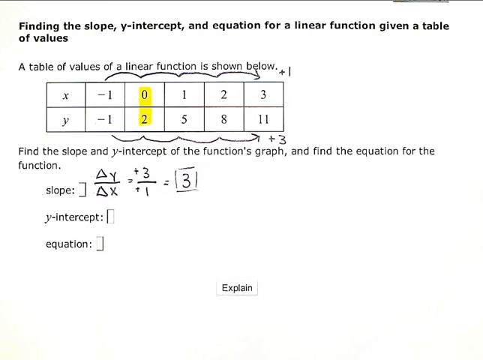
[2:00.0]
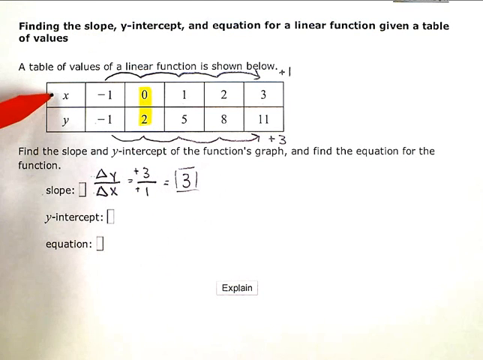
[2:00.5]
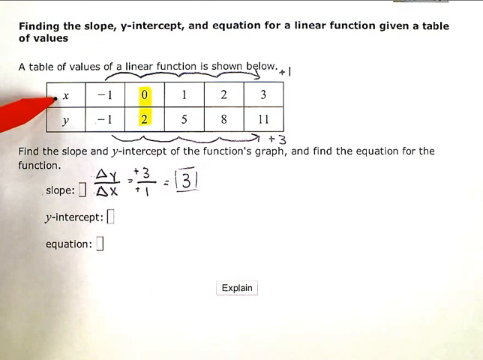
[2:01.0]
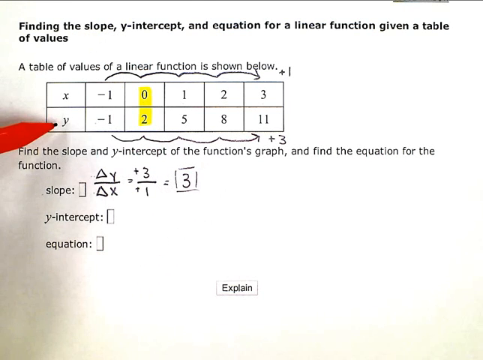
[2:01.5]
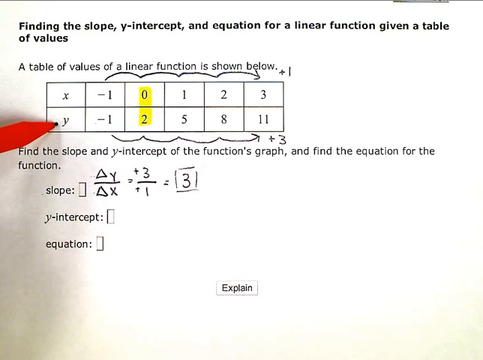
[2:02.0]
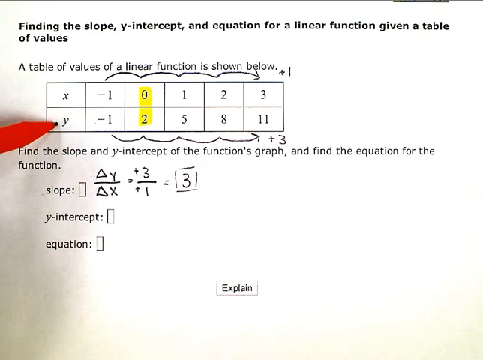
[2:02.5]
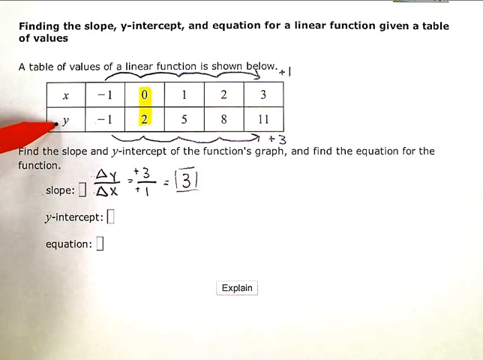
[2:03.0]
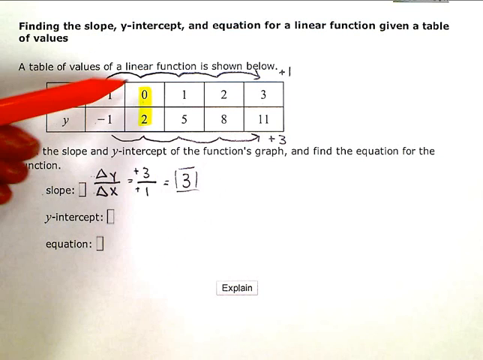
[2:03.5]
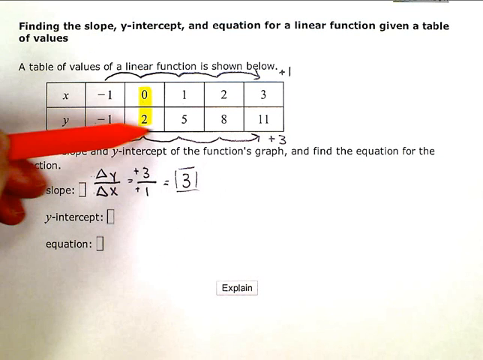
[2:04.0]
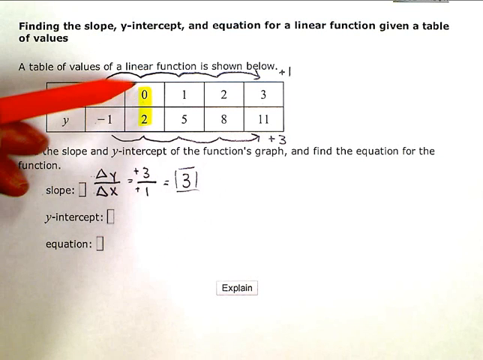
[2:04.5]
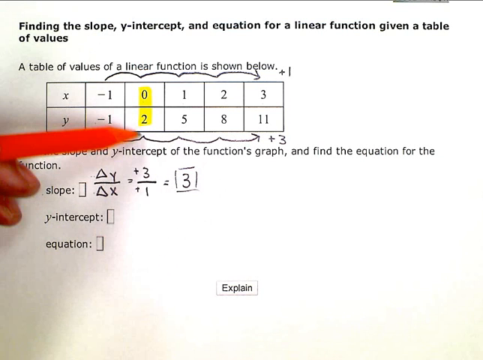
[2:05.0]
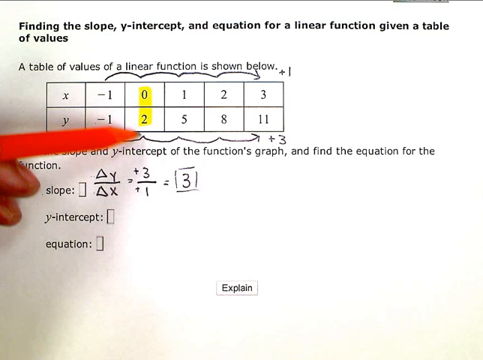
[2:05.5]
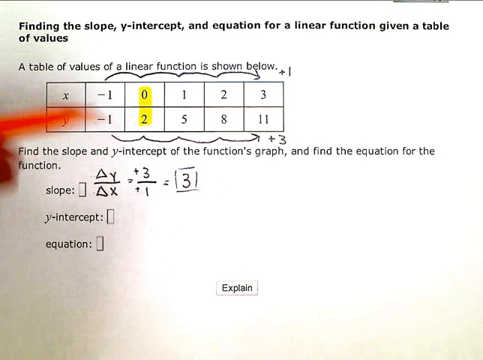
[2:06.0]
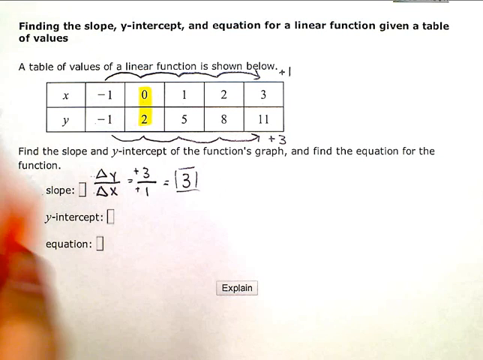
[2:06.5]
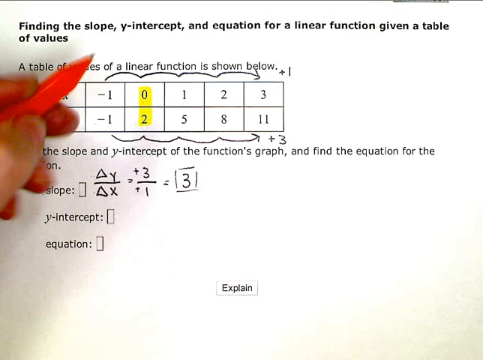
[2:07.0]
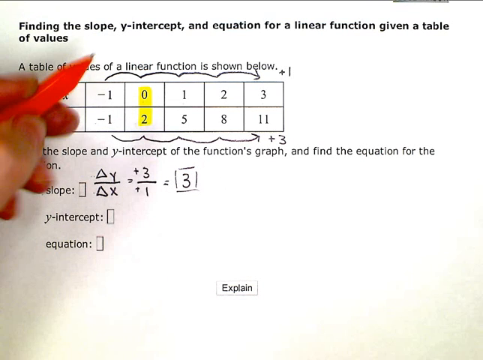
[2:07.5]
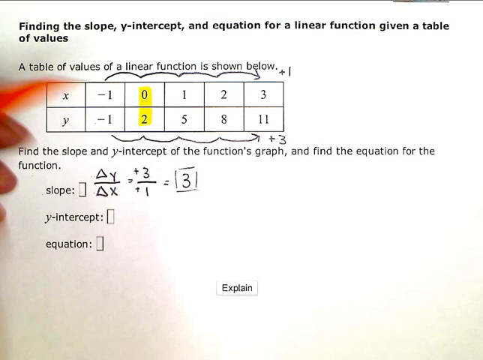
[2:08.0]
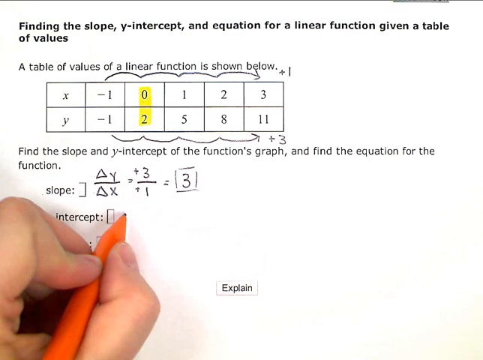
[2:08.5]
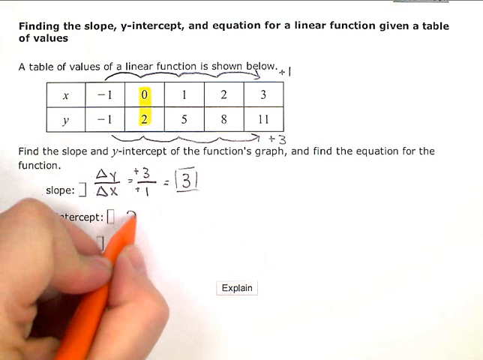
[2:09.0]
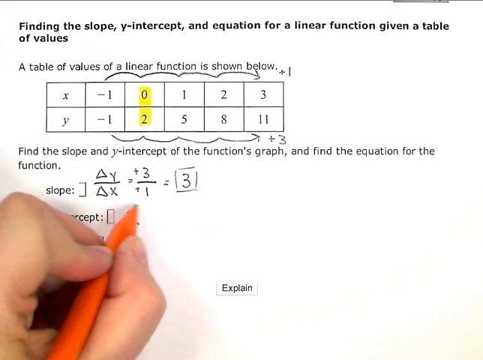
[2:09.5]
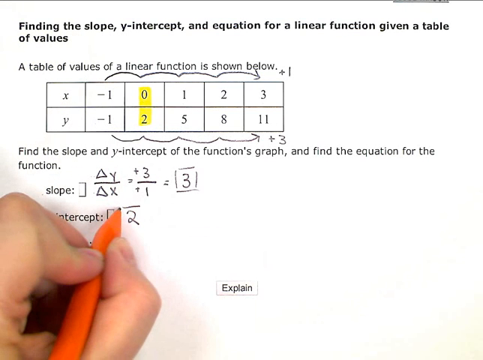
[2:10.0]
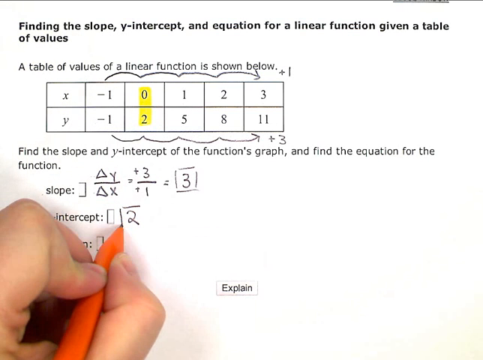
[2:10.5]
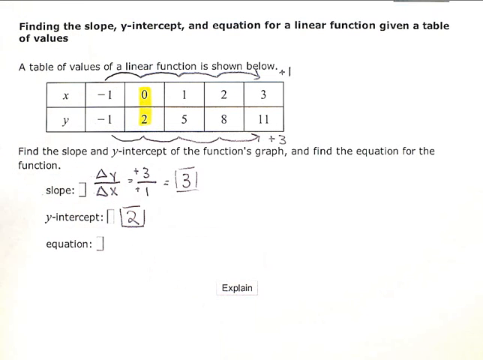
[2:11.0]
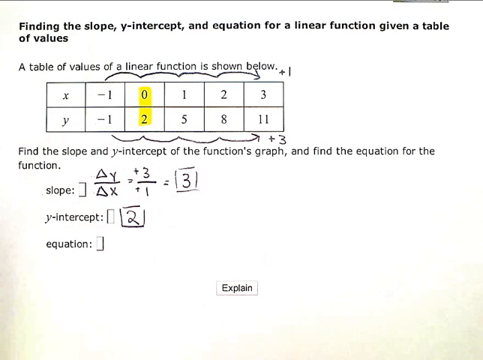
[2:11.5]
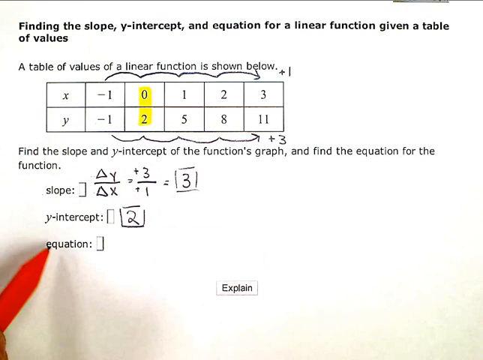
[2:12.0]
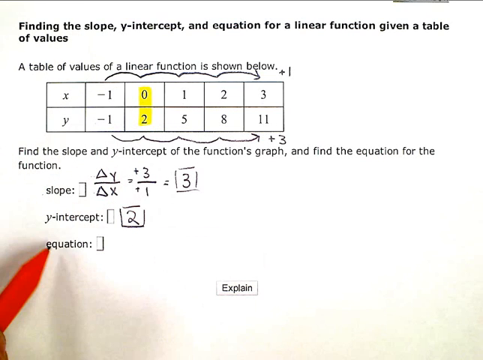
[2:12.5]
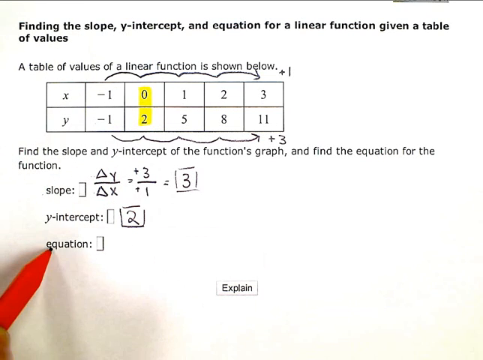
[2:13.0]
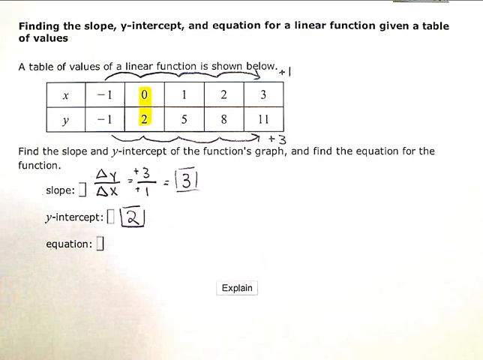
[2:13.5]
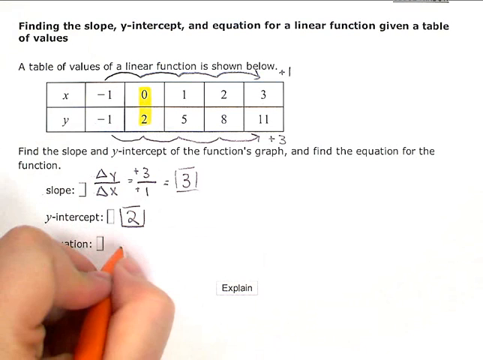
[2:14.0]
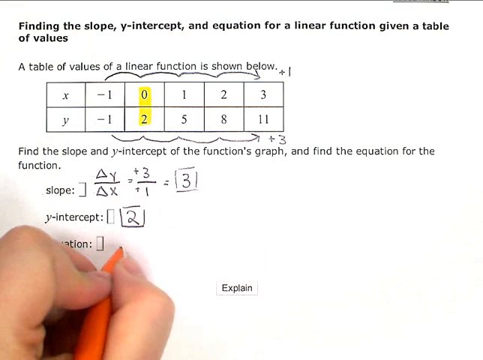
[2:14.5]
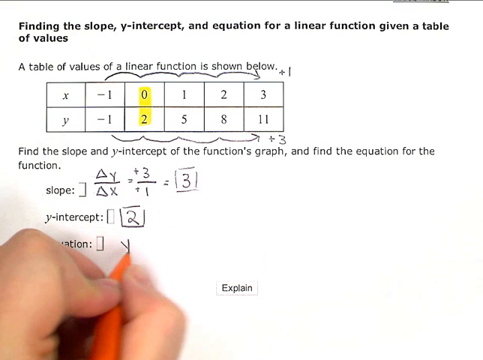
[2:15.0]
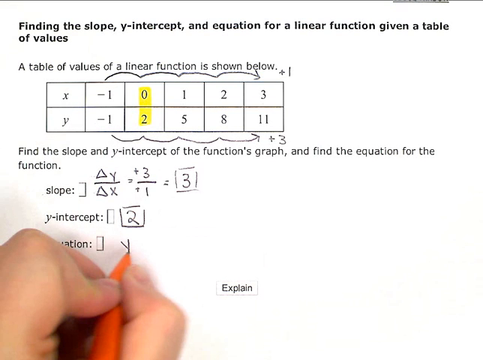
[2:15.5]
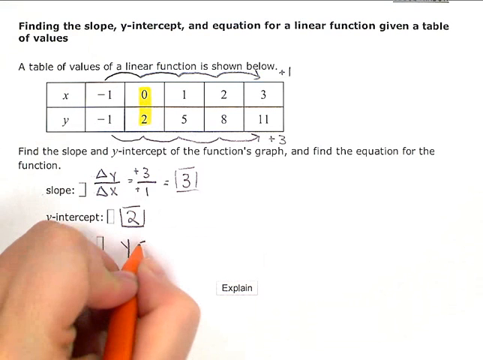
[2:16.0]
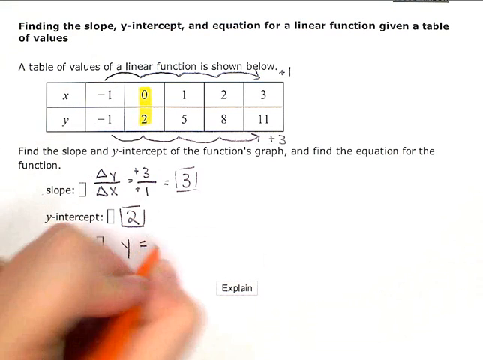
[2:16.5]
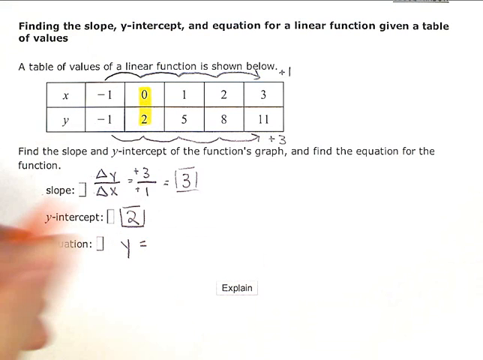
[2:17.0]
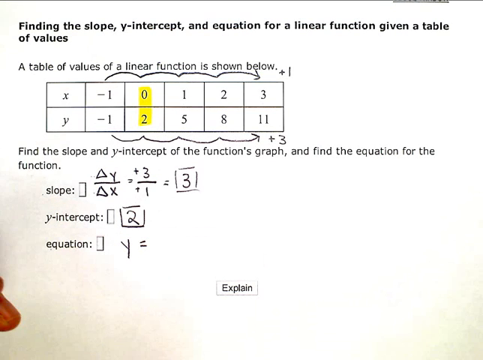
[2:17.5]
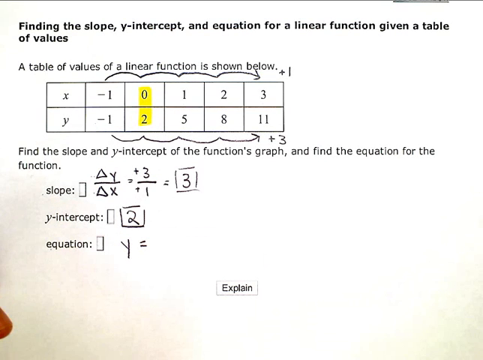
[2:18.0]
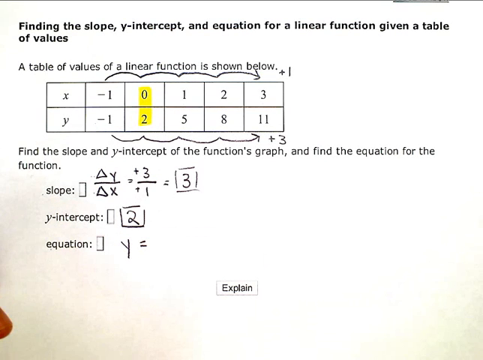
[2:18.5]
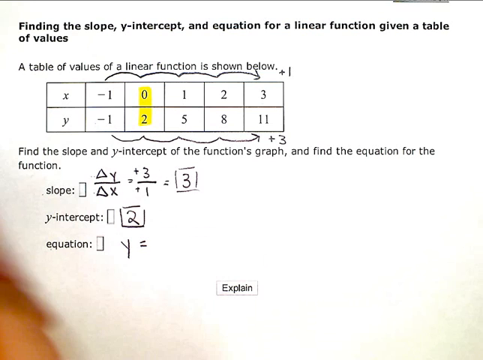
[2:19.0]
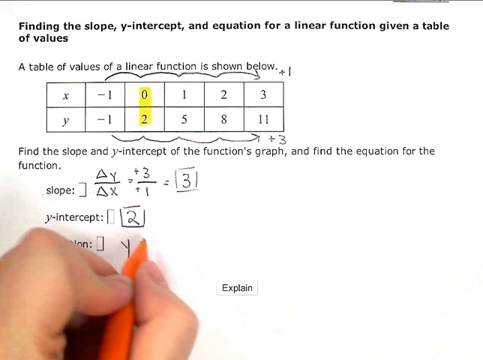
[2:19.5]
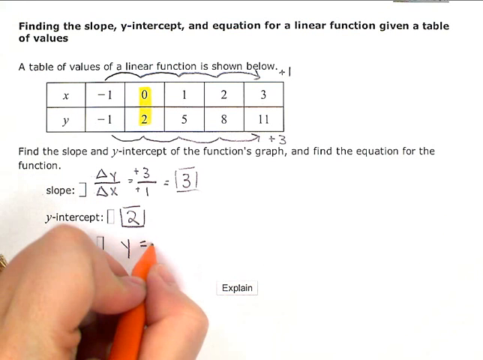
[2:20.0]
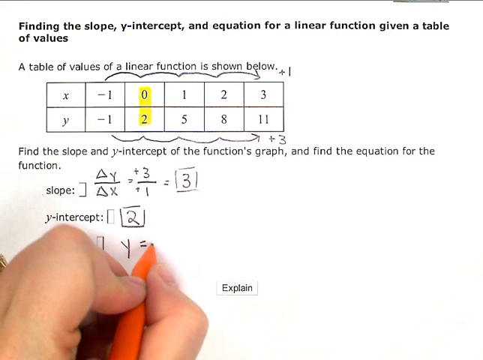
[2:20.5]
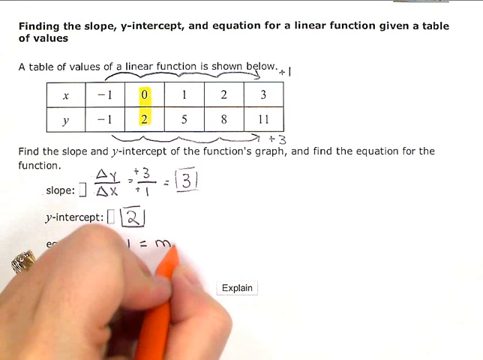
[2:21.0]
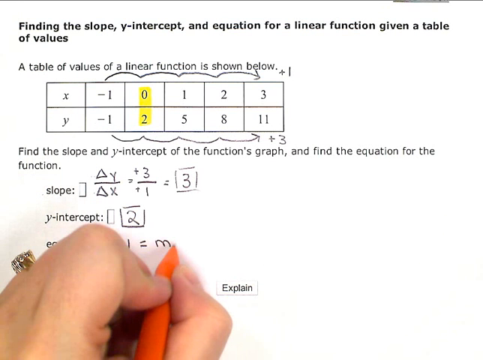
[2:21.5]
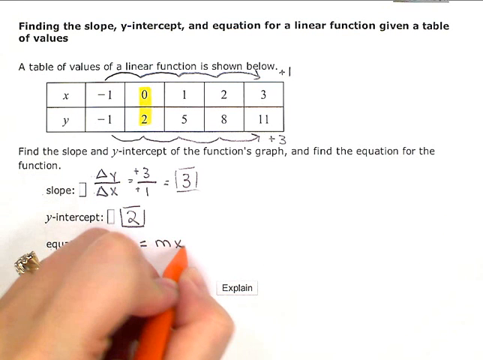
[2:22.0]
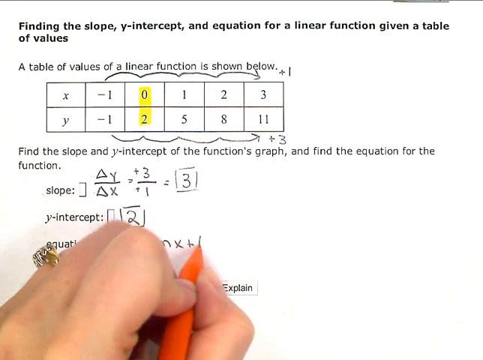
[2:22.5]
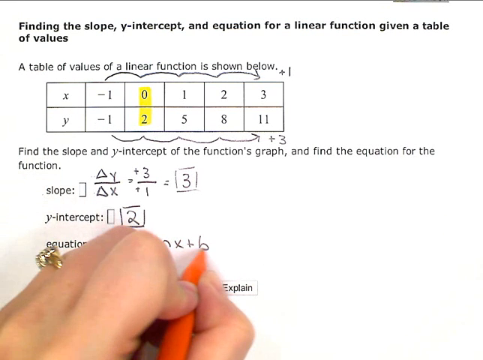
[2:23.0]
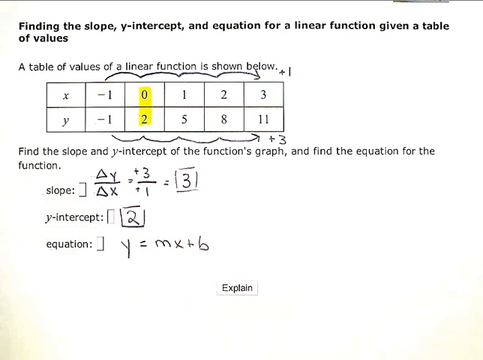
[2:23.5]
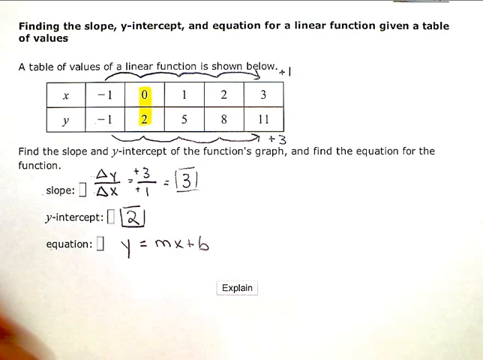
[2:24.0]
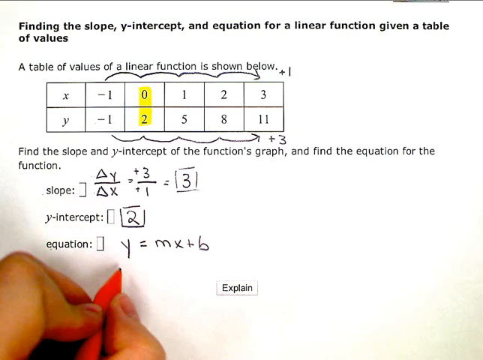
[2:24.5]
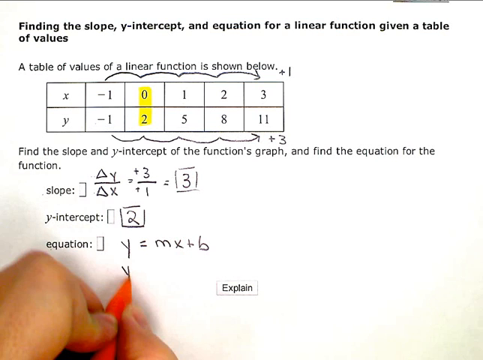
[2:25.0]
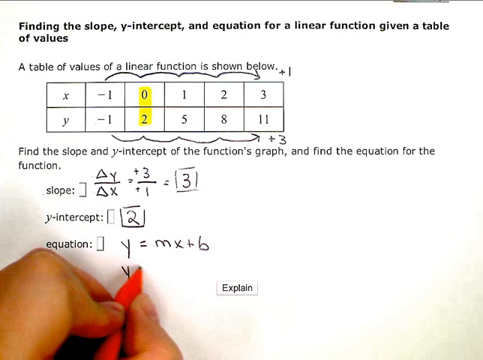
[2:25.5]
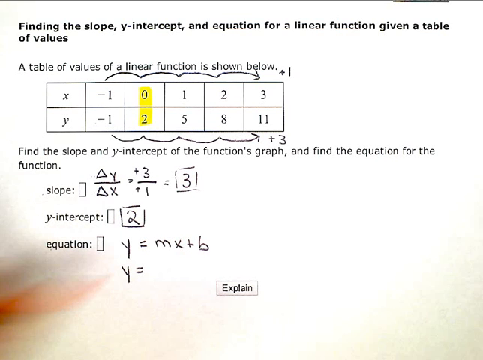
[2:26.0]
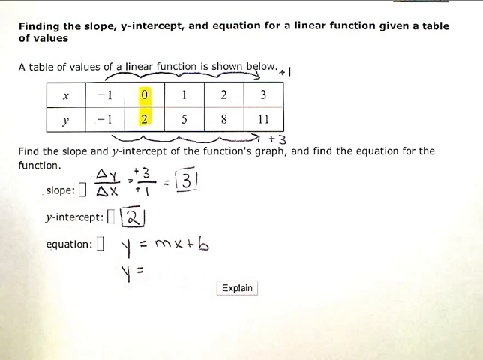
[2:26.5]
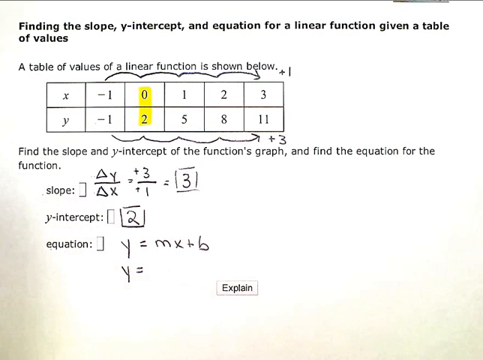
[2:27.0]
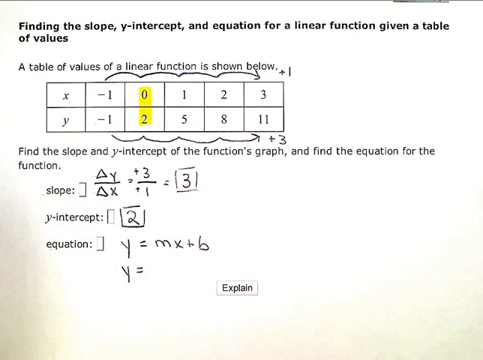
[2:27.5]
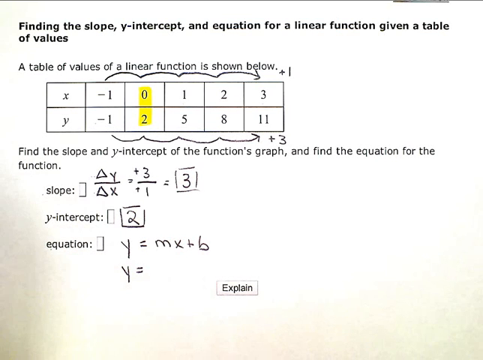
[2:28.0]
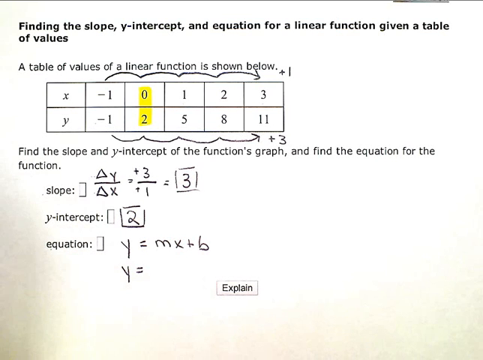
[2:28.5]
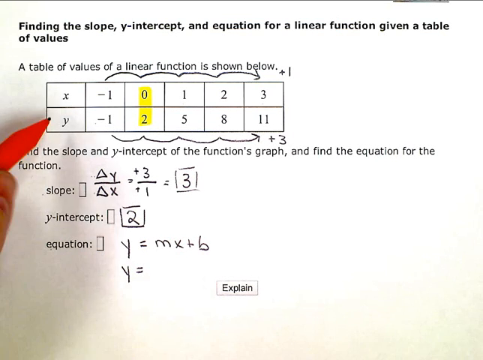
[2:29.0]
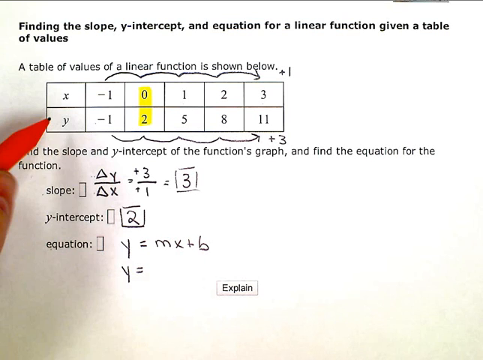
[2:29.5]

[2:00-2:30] The assignment "finding the slope, y-intercept, and the equation for a linear function given a table of values" is shown with a table of y and x. The x numbers are -1, 0, 1, 2 and 3, going up by one each step, and the y numbers are -1, 2, 5, 8 and 11, going up by three. Below is the task "find the slope and y-intercept of the function graph and find the equation for a function". The slope is delta y divided by delta x, which equals +3 divided by +1, which equals 3, and the 3 is in a box. The man points out 0 and 2 in the yellow boxes. The y-intercept is then given as 2 and put in a box. Under equation appears y = mx + b, with another y beneath it. The explain button is at the bottom.